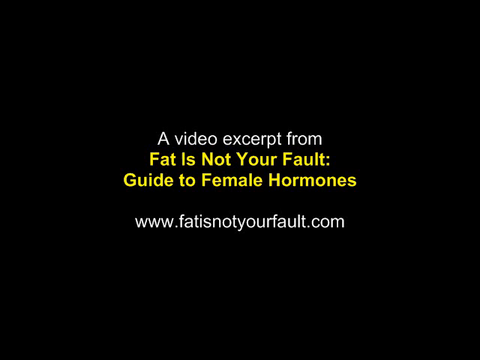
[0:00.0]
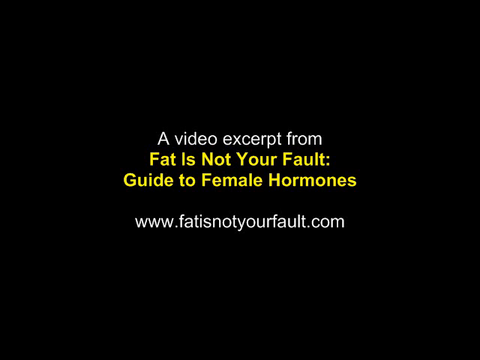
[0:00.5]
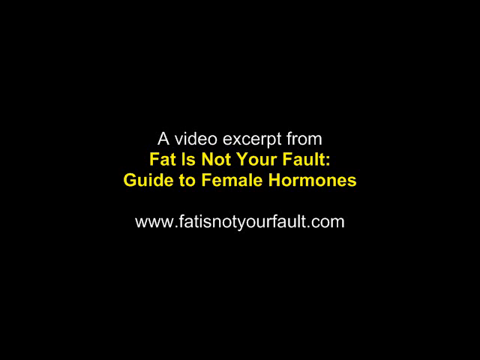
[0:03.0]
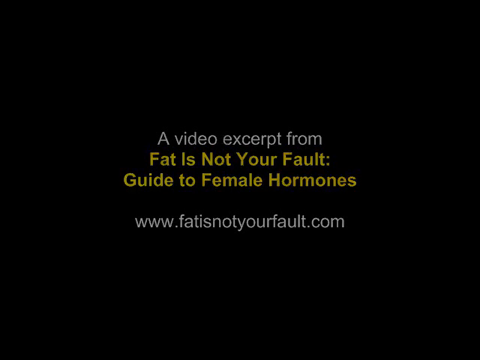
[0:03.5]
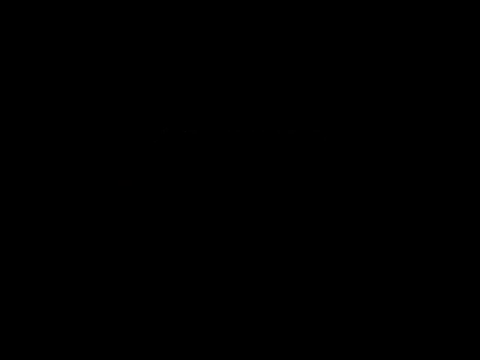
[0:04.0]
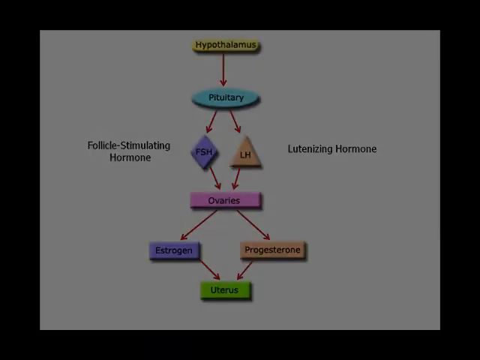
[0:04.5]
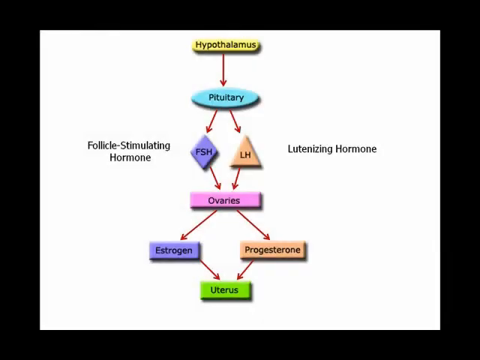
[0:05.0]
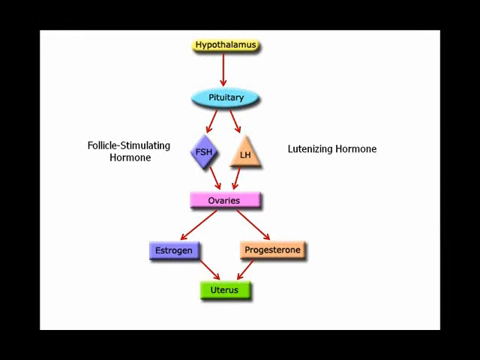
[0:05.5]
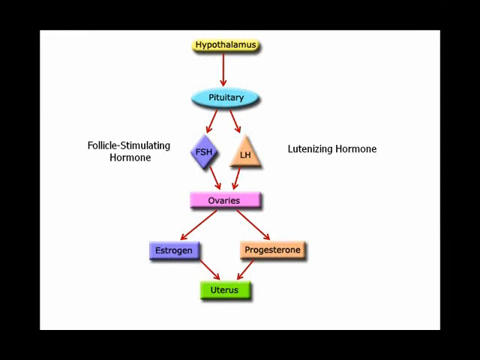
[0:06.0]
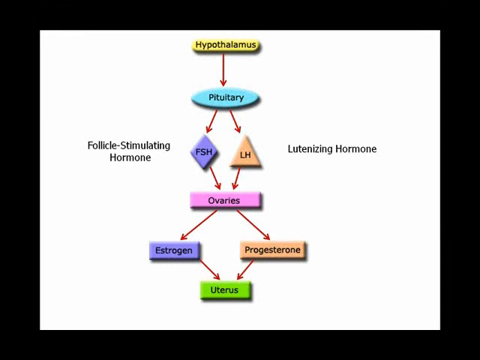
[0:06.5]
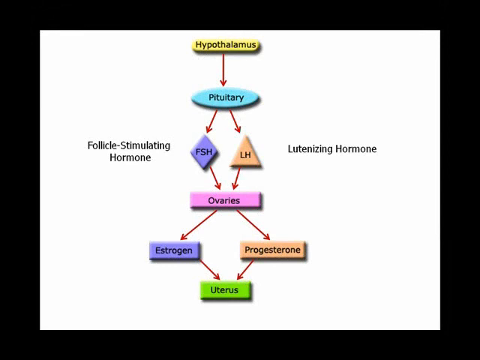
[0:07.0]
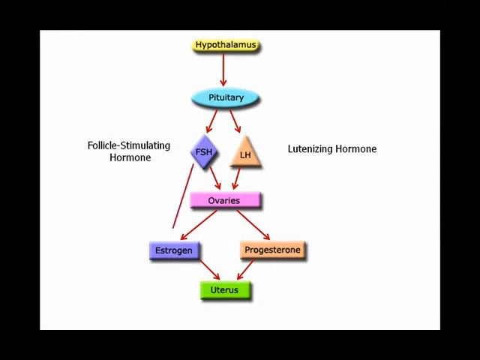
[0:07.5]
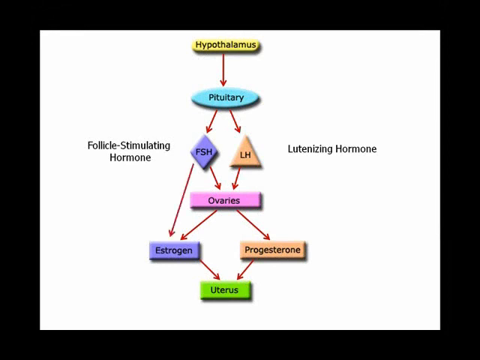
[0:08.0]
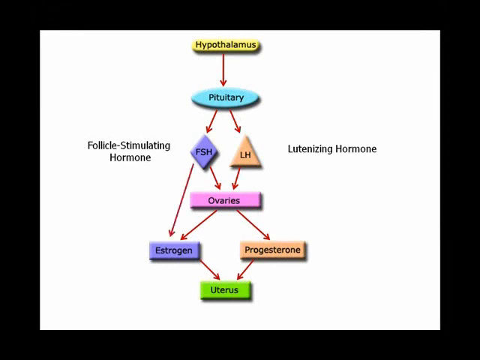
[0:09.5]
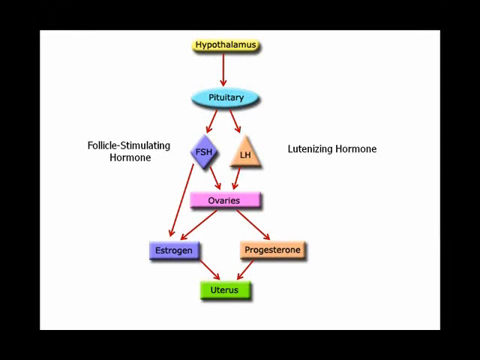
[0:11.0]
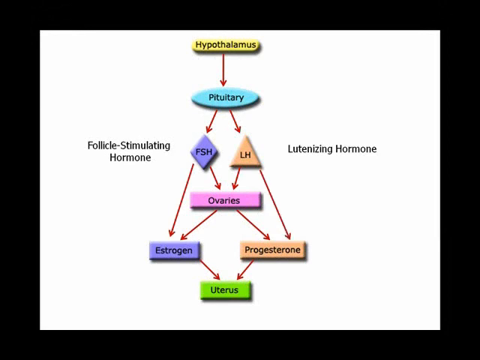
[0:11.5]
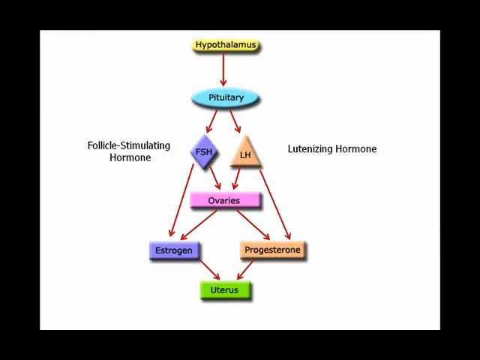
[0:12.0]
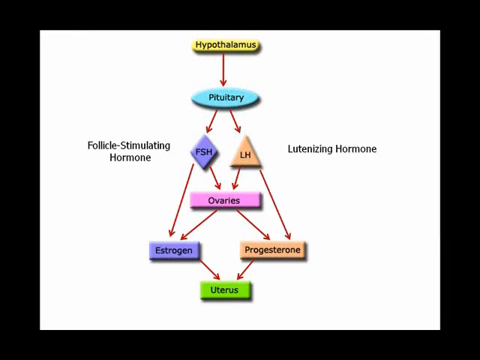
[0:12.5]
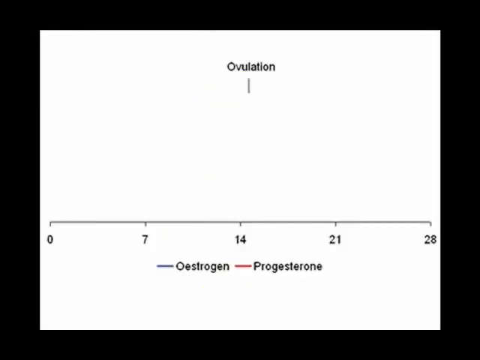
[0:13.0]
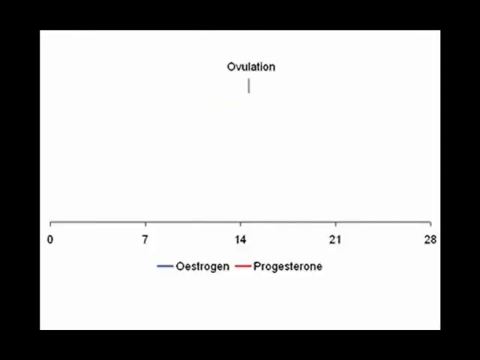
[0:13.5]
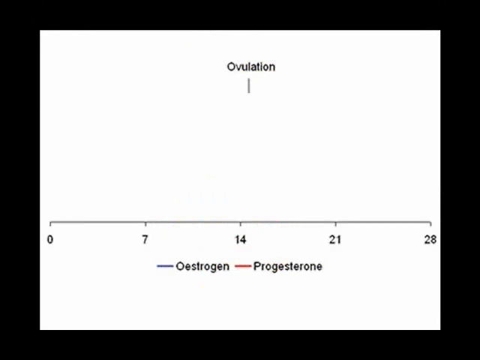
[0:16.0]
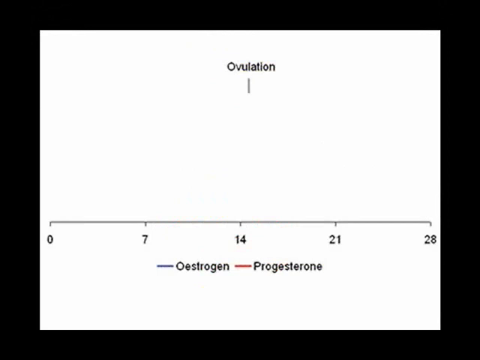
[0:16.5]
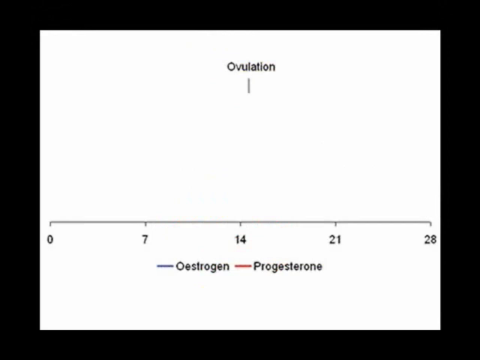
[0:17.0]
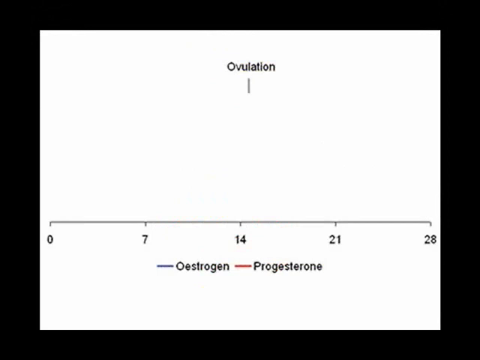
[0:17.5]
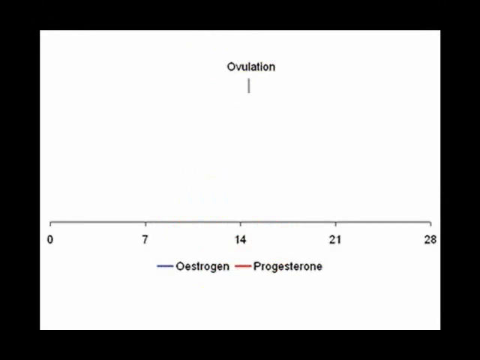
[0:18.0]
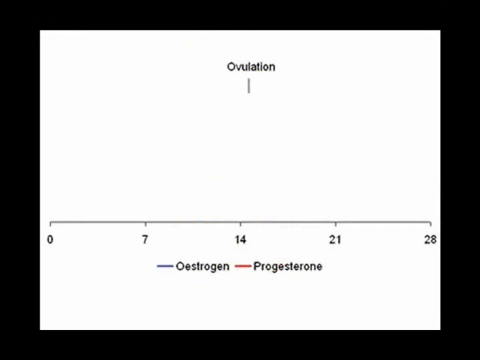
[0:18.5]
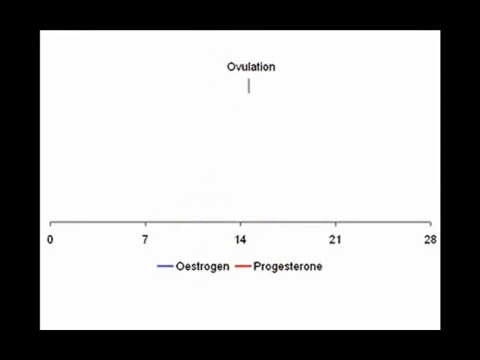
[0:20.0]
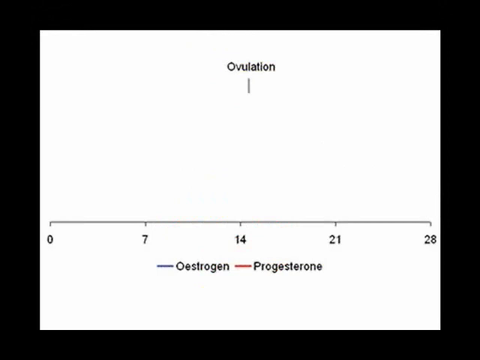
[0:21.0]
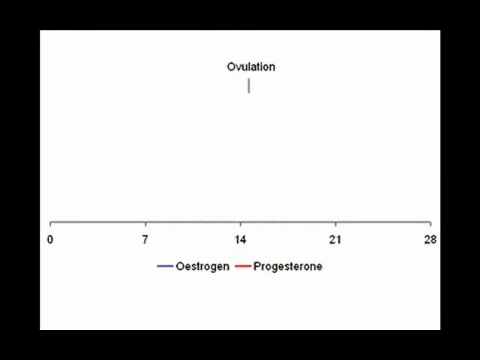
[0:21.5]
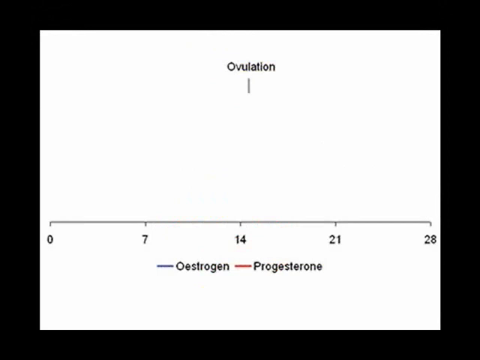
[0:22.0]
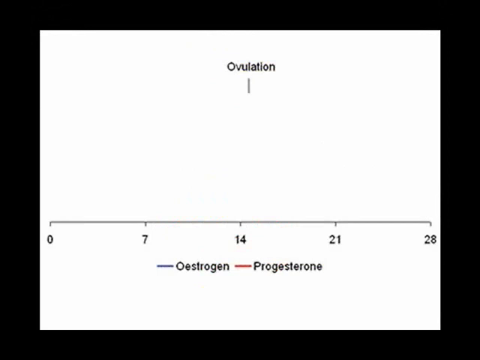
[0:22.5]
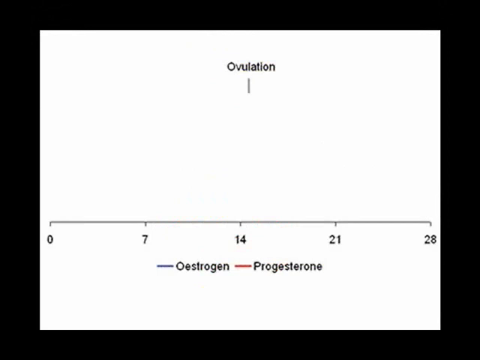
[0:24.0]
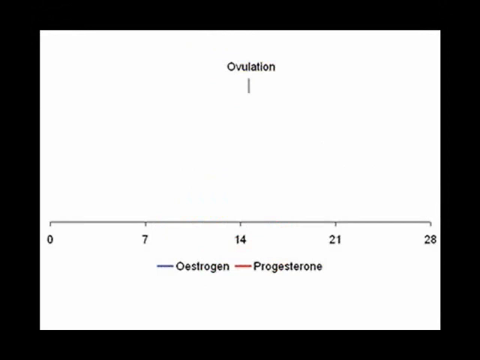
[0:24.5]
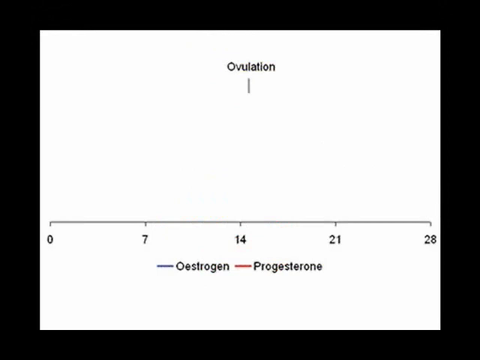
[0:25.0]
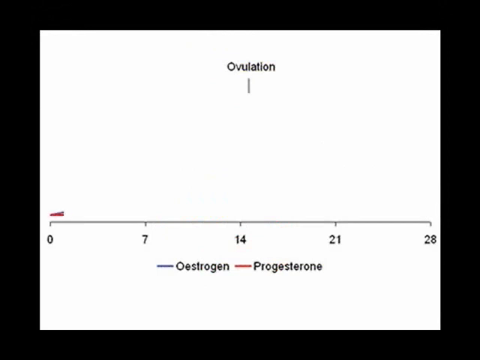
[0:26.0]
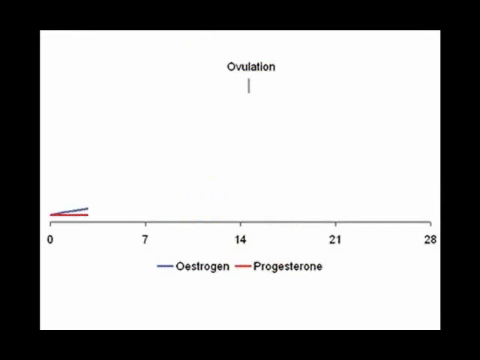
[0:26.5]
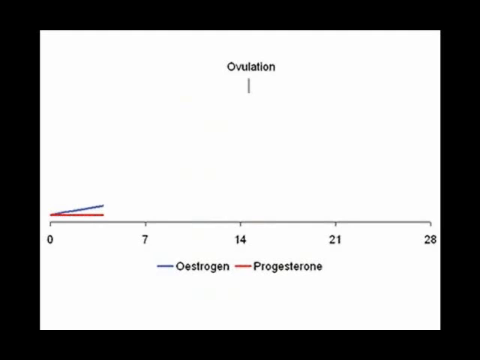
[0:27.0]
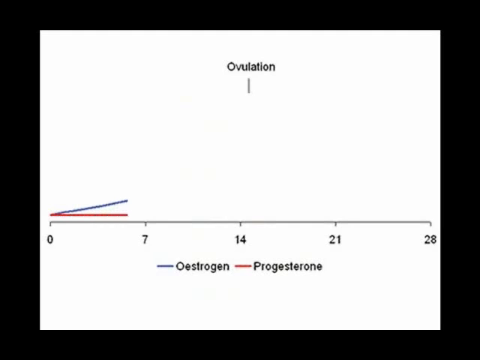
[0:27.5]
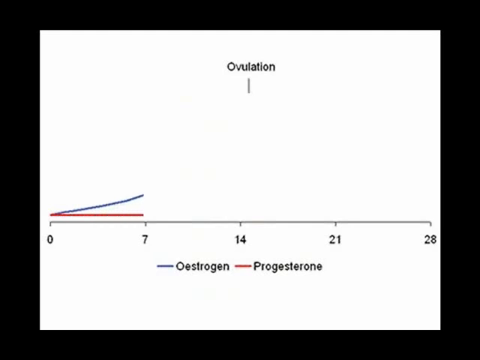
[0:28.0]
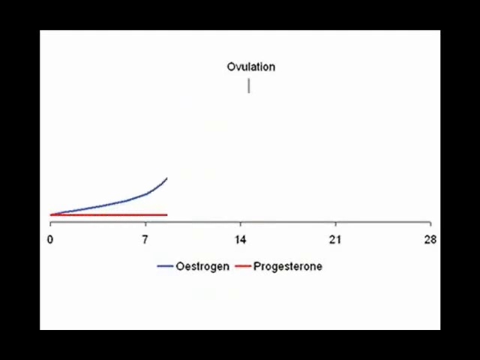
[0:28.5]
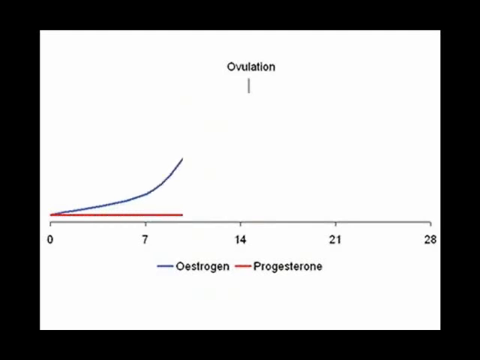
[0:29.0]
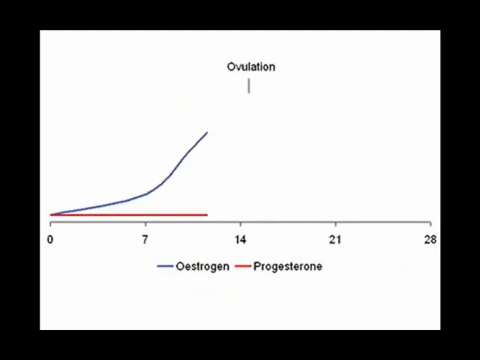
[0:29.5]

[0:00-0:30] The first frame shows a paragraph introducing a video excerpt from "Fat Is Not Your Fault, Guide to Female Hormones, www.fatisnotyourfault.com", written in a mix of white and yellow letters on an entirely jet-black background. The title page then disappears and is replaced by a flowchart slide. At the top is the word "hypothalamus", with an arrow pointing down to "pituitary". From the pituitary, two arrows branch out: on the left, the letters "FSH" are enclosed in a purple triangle, with the words "follicle stimulating hormone" off to their left; on the right, the letters "LH" are in a light orangish square, with the words "luteinizing hormone" off to their right. Arrows from the bottom of the purple and orange shapes point down to the word "ovaries". From the bottom of "ovaries", two arrows point out: the left one to "estrogen" in a purple rectangular box, and the right one to "progesterone" in a light orange rectangular box. An arrow from the right of estrogen and an arrow from the left of progesterone both point to the same green rectangular box containing the word "uterus".